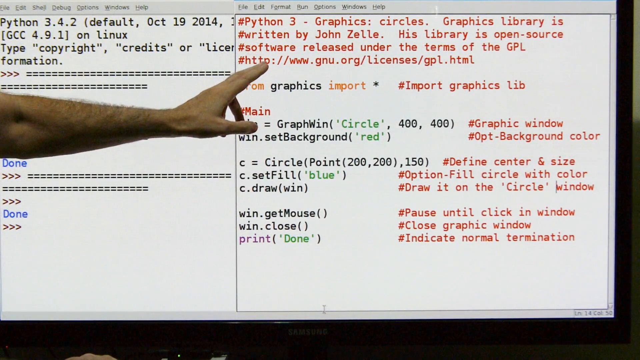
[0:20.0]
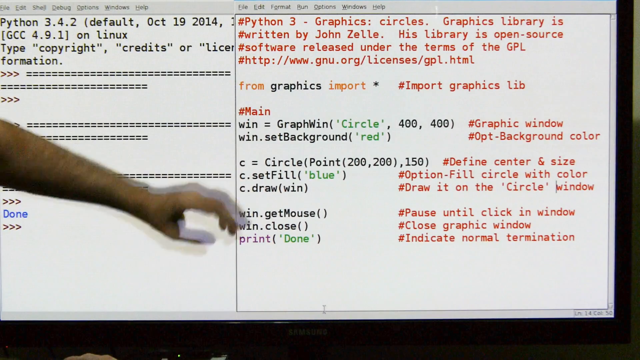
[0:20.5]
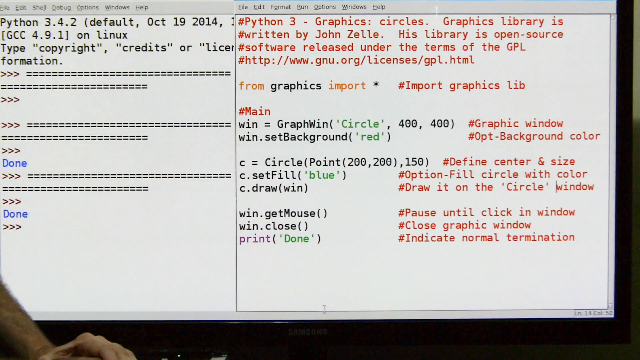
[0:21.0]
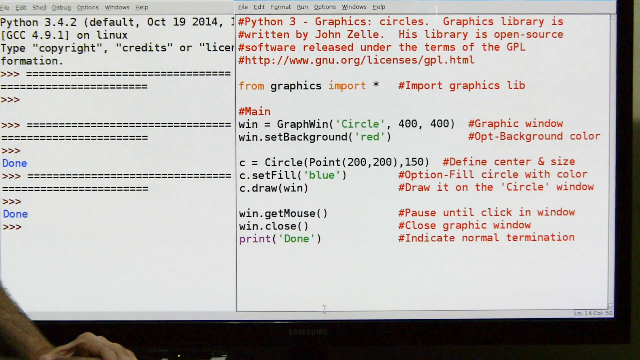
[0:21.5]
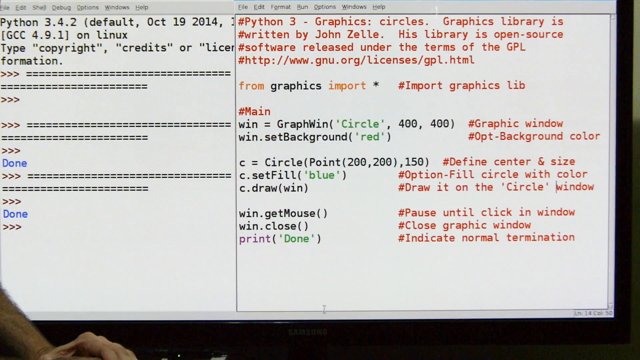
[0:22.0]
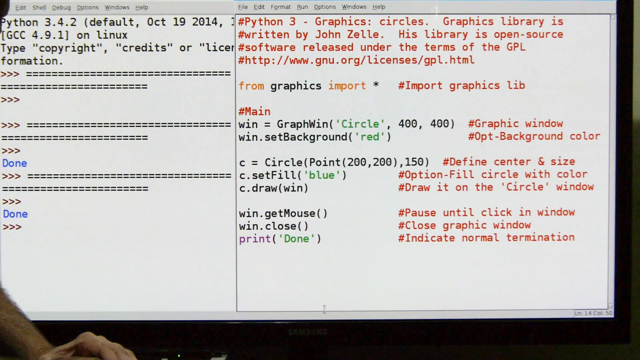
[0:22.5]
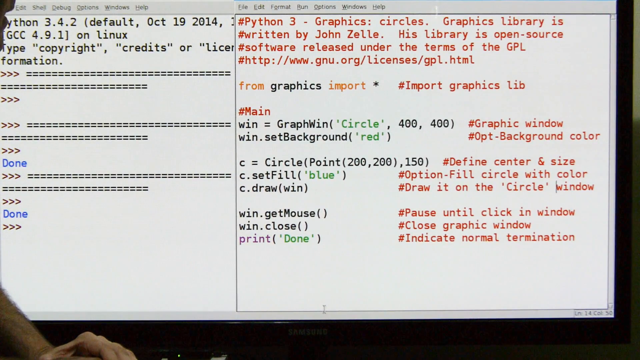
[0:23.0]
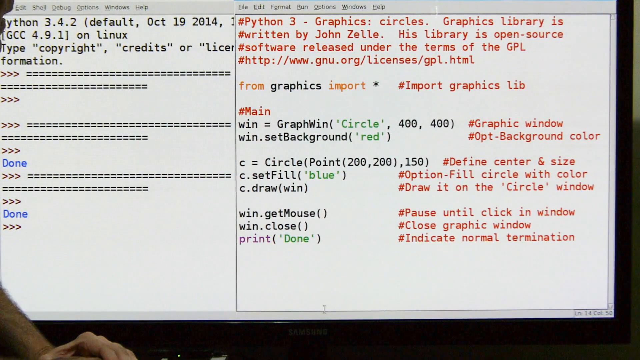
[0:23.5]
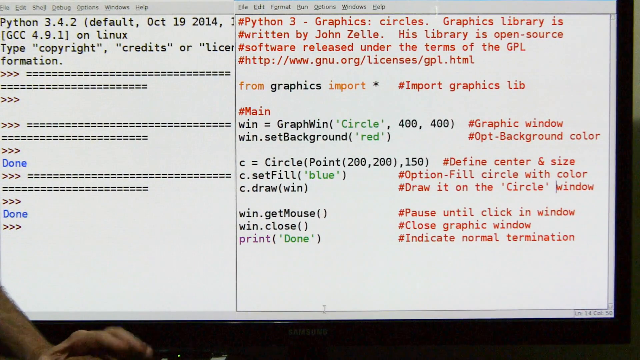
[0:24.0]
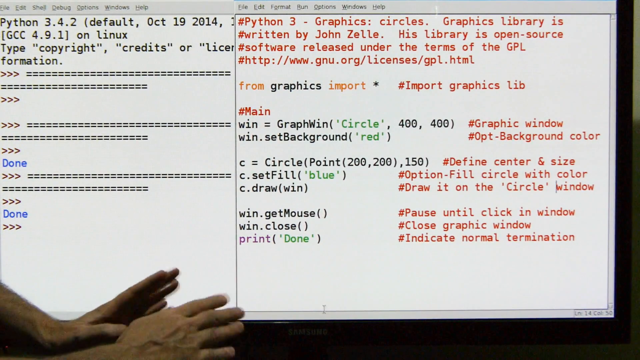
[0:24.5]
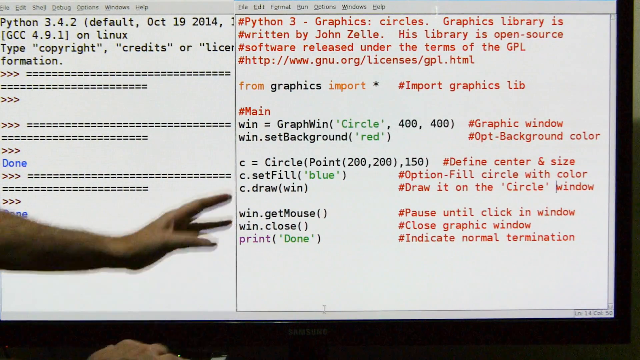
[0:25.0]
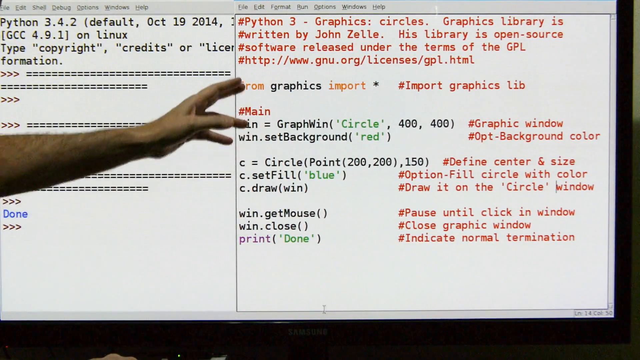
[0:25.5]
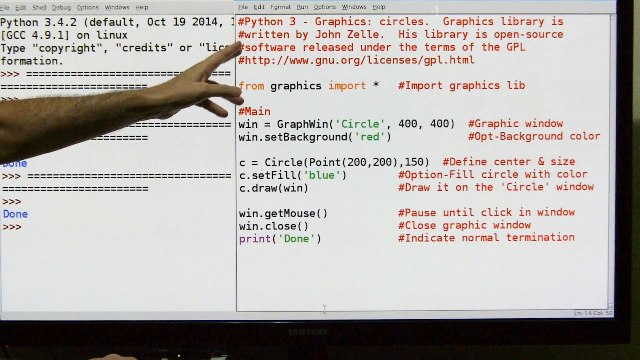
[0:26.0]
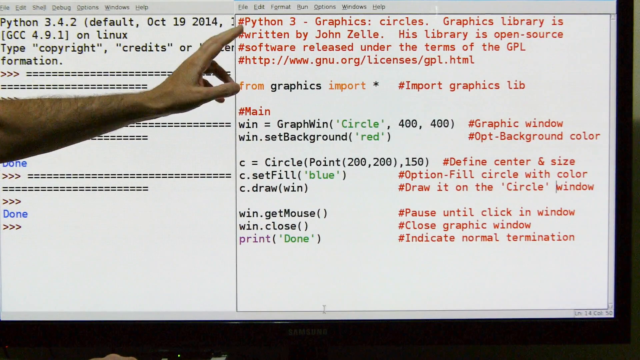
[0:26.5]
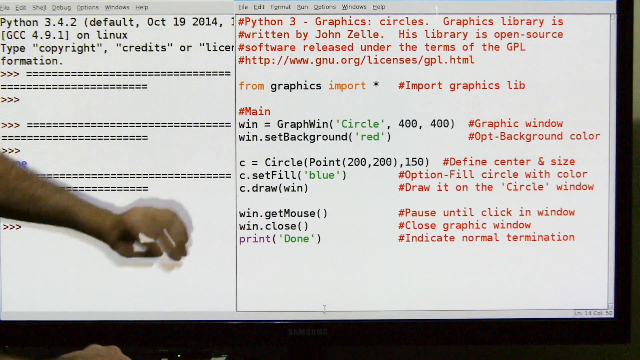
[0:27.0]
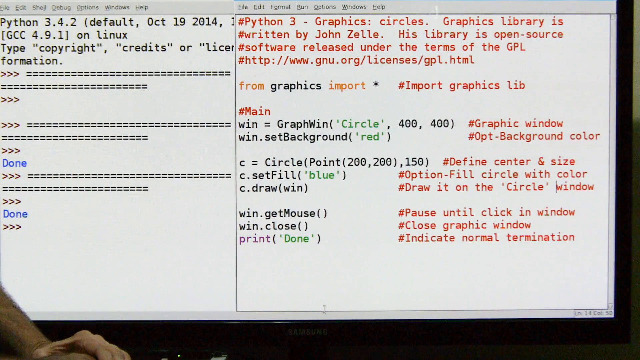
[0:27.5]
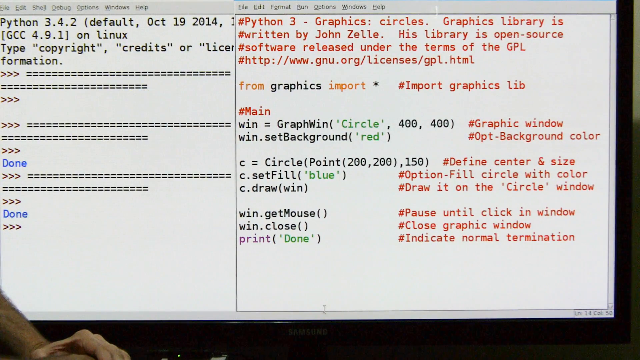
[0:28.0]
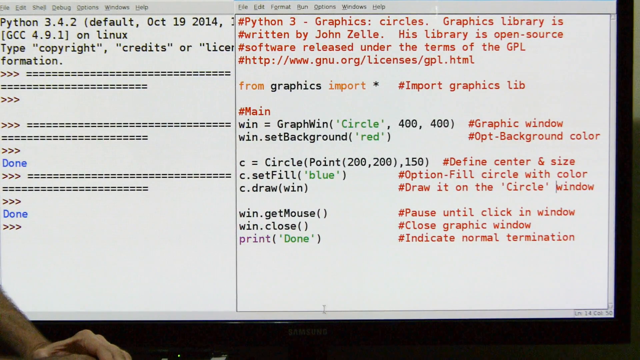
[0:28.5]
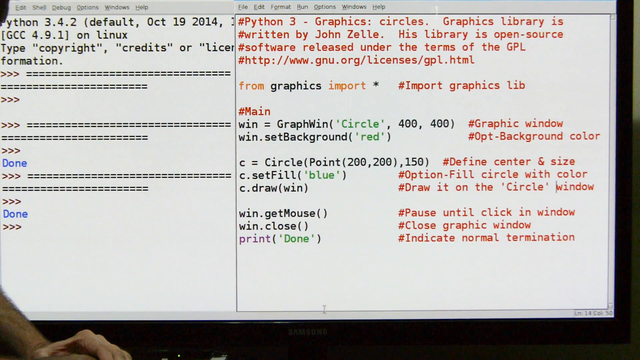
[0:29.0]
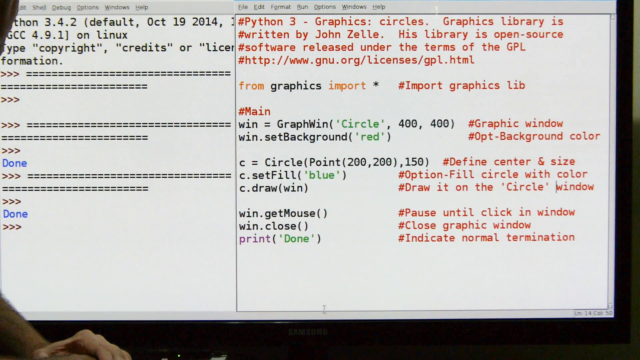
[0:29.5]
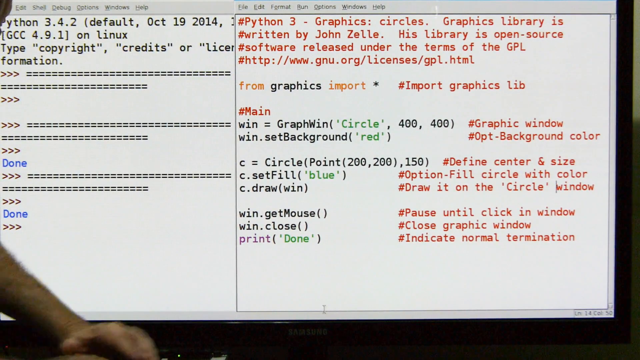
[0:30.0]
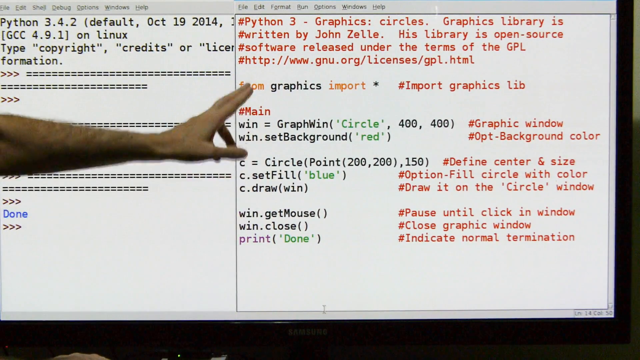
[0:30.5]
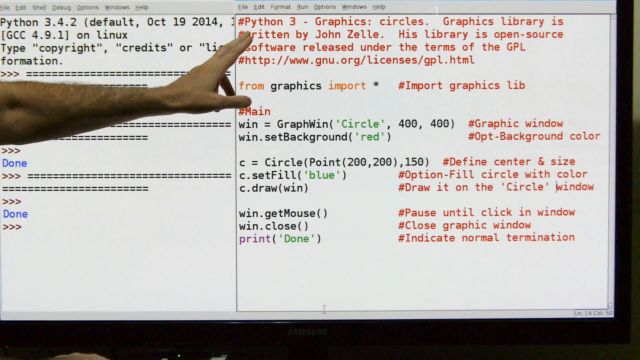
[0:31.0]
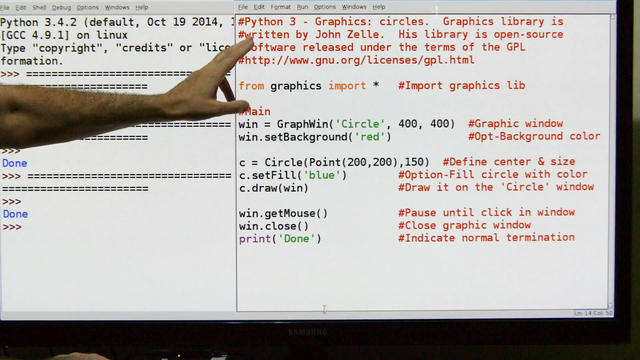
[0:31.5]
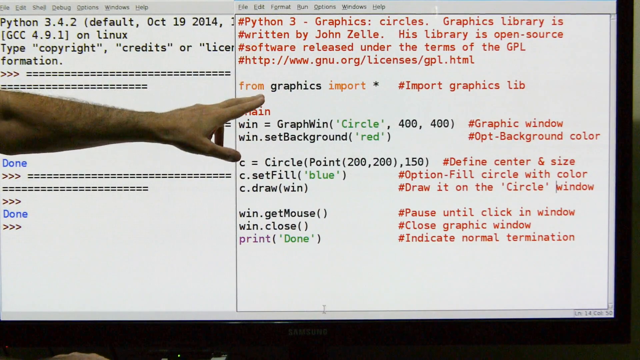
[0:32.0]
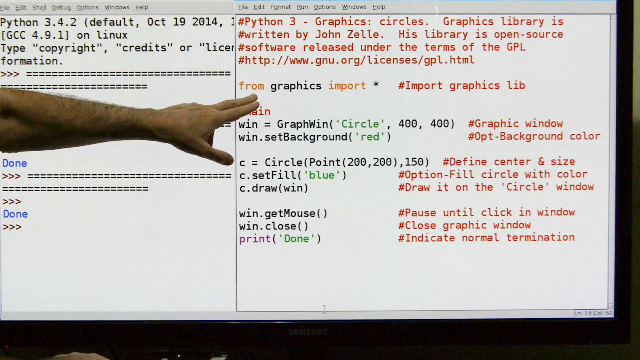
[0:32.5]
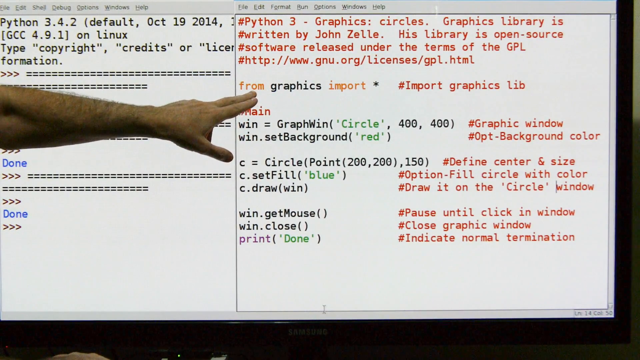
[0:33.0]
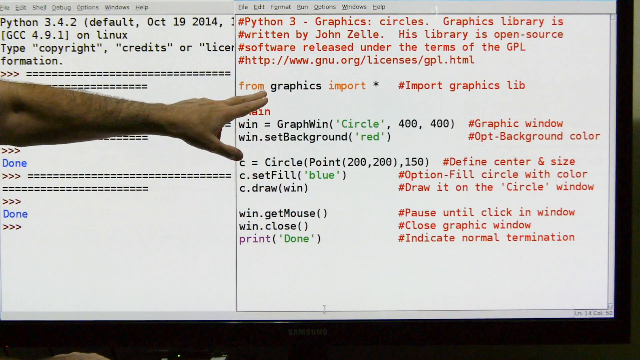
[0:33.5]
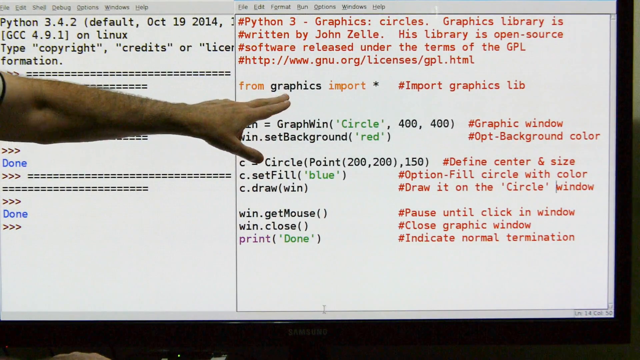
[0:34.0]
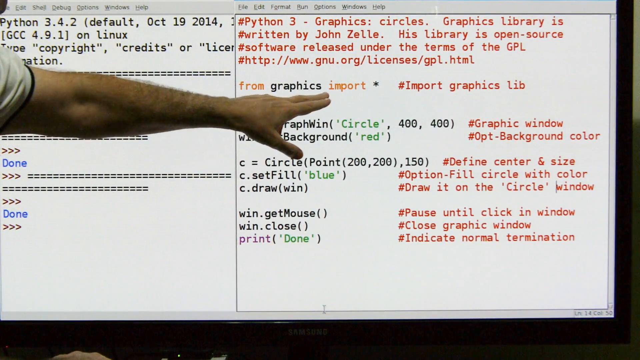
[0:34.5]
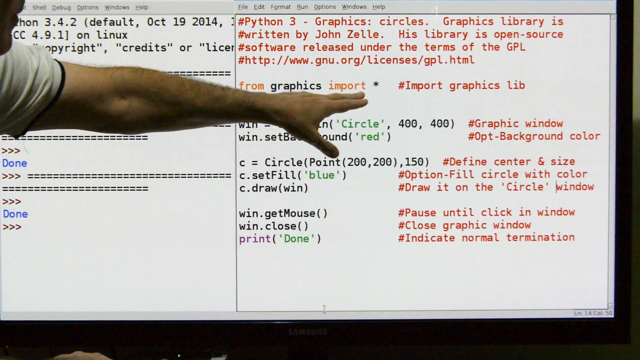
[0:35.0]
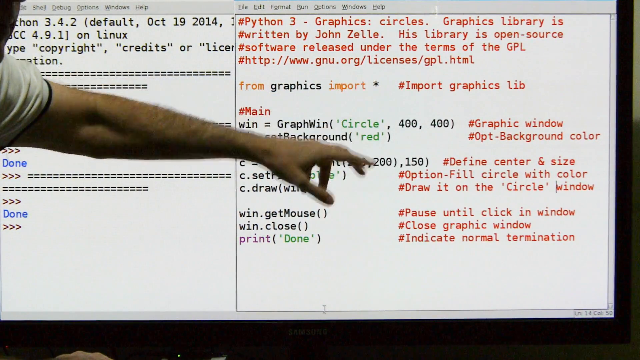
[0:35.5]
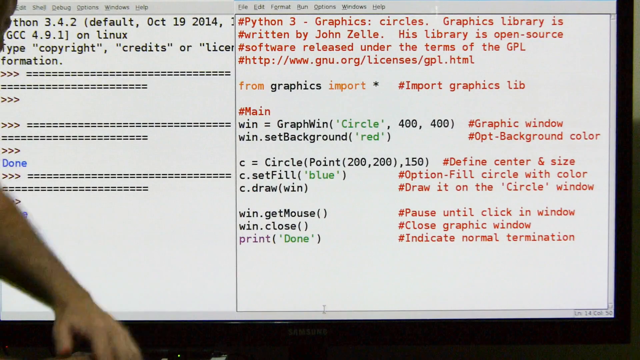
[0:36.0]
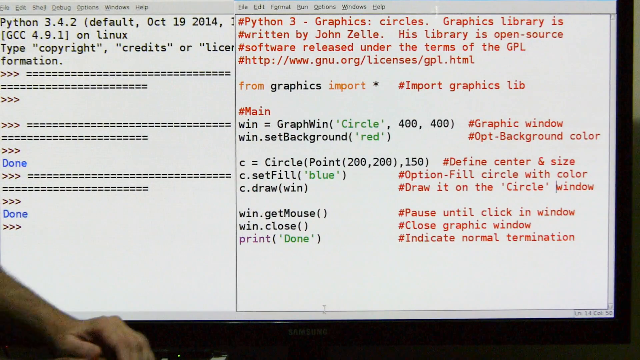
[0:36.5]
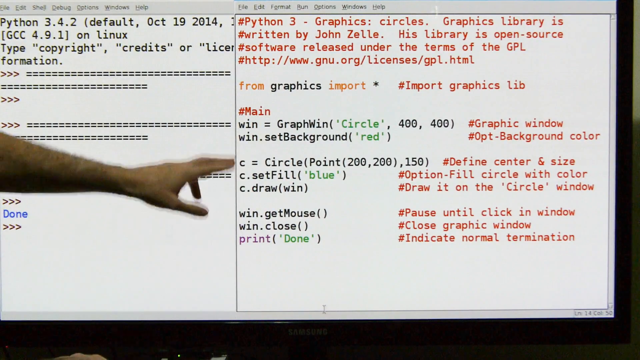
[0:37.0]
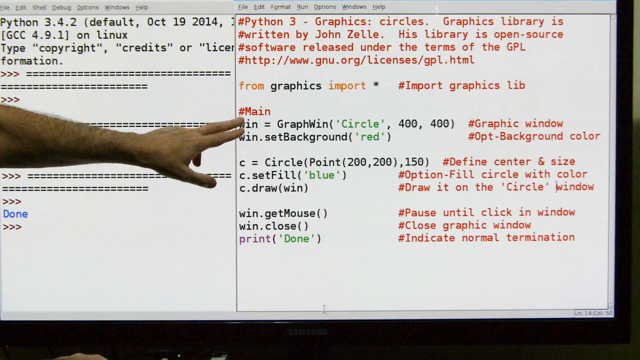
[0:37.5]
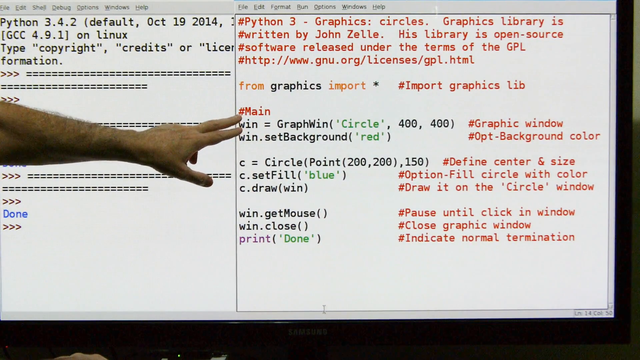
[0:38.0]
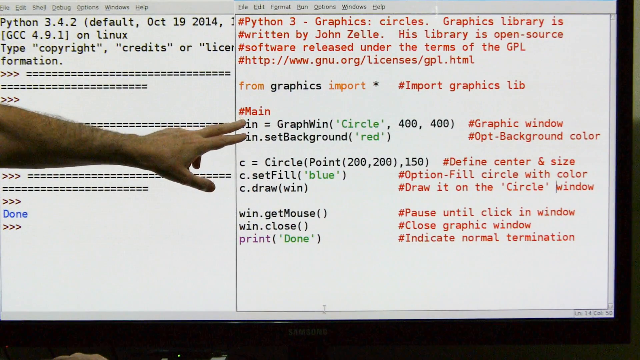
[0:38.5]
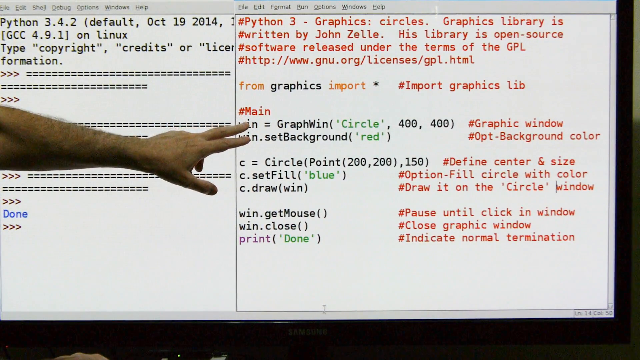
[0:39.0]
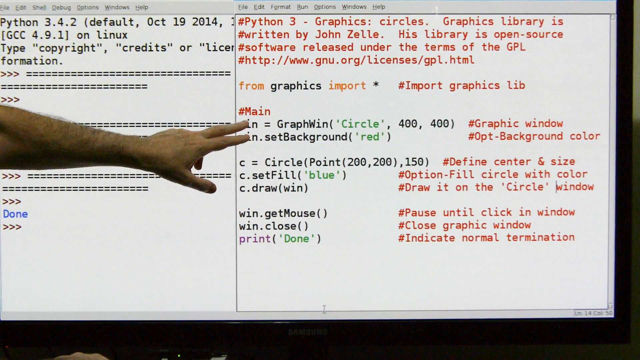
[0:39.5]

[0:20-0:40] The teacher continues explaining the Python 3 graphics circles code, using hand gestures, his lips moving as he talks. He points at the text "written by John Sealy. His library is open source software released under the terms of the GPL," followed by a URL link. Where his hand moves there are lines reading "from graphics import" and "import graphics LIB." The main code includes win equals GraphWin with "circle" and 400, 400, labelled "graphic window"; win.set background red with a background color note; c equals circle with point 200, 200 and 150, labelled "define center and size"; c.set fill with "blue", labelled "option fill circle with color"; "draw it on the circle window"; win.get mouse with open and closed brackets, labelled "pause until click in window"; window.close, labelled "close graphic window"; and a print done line.